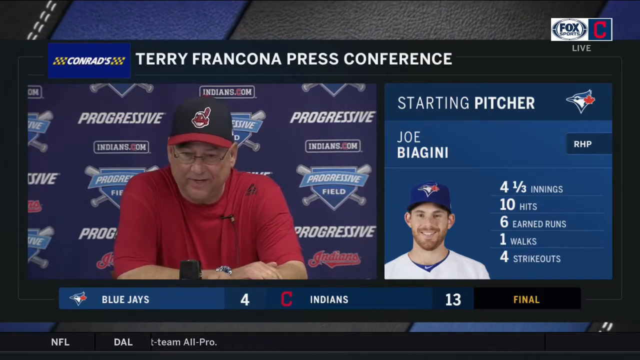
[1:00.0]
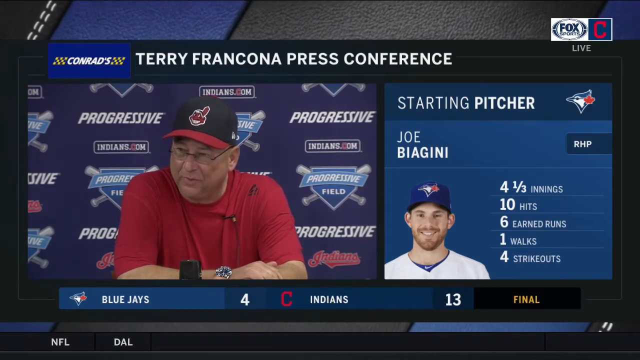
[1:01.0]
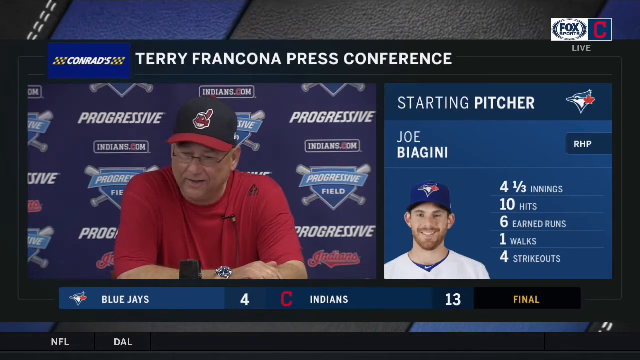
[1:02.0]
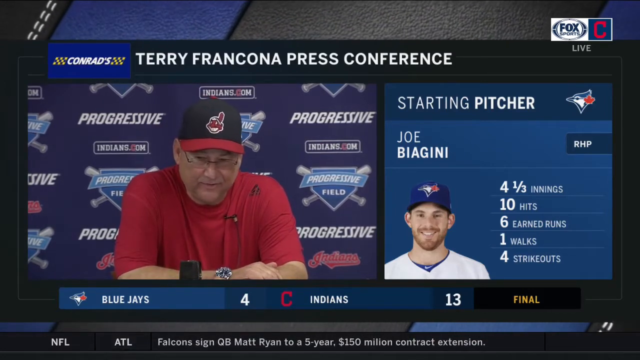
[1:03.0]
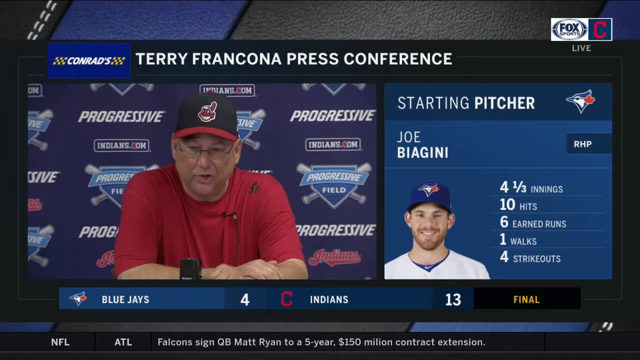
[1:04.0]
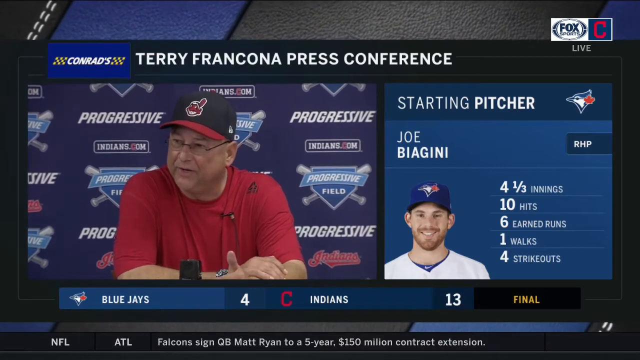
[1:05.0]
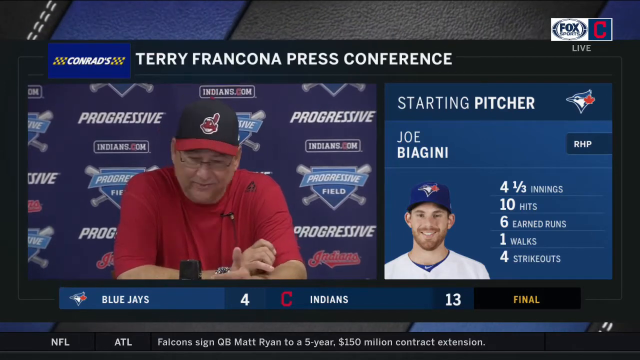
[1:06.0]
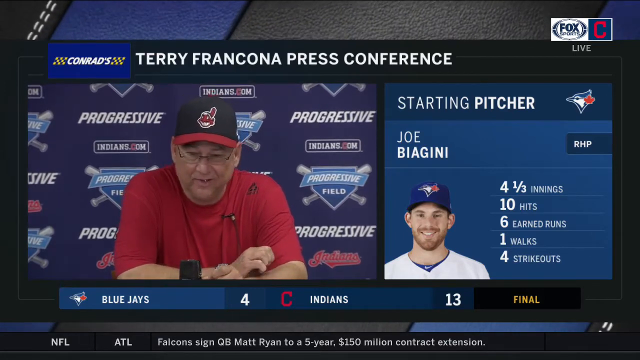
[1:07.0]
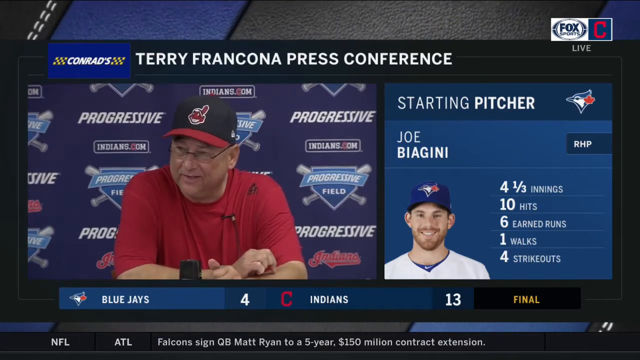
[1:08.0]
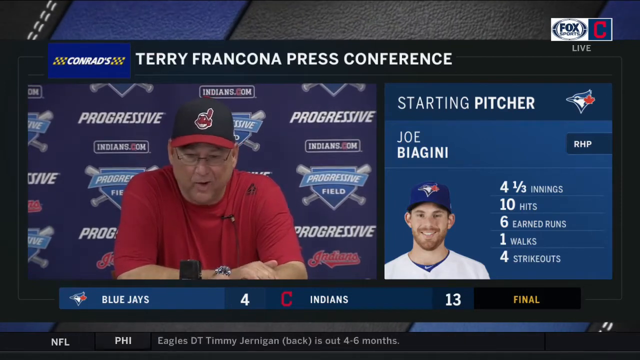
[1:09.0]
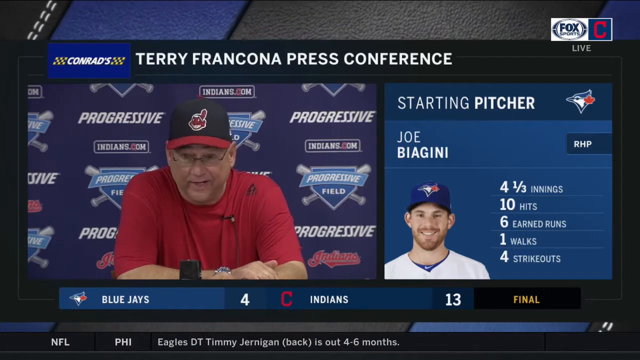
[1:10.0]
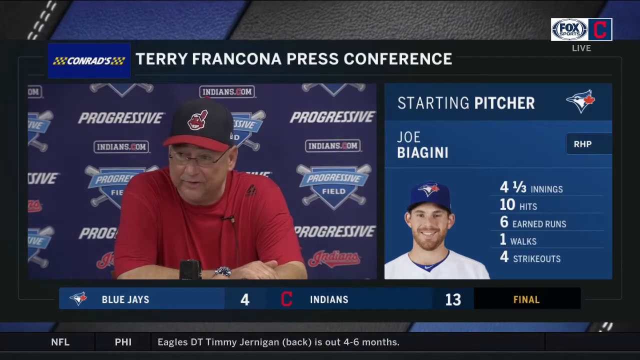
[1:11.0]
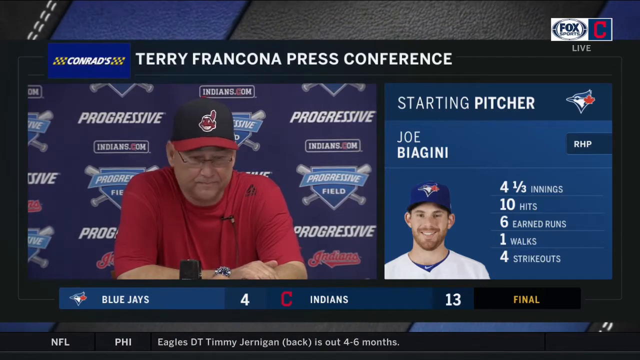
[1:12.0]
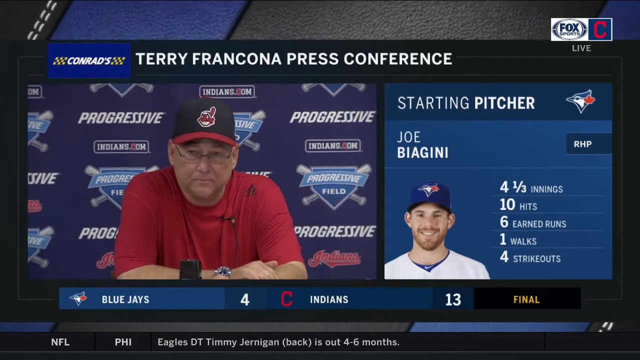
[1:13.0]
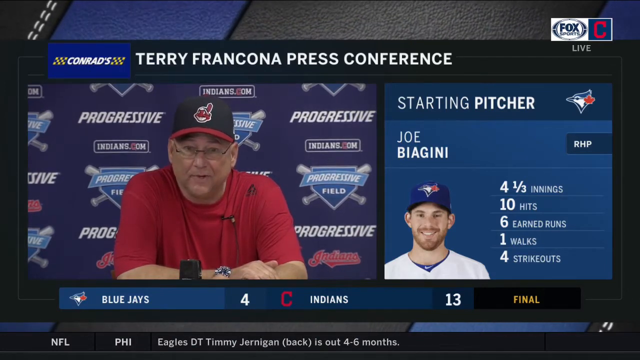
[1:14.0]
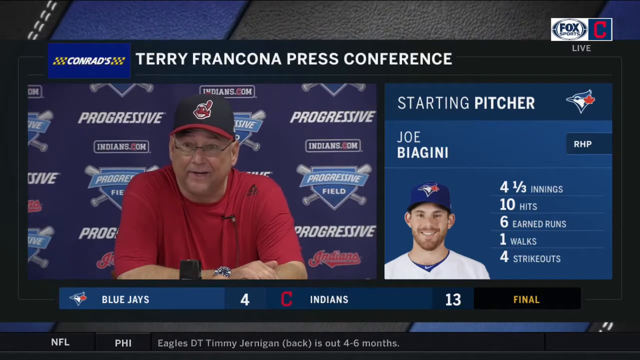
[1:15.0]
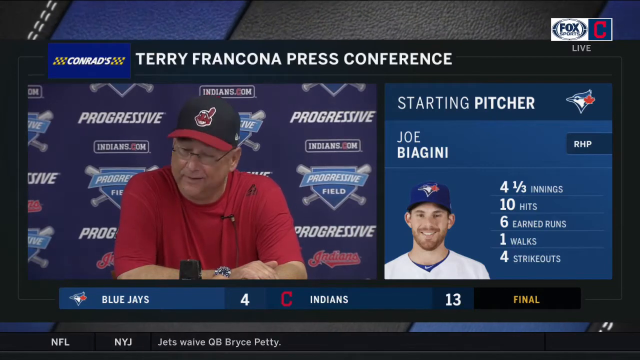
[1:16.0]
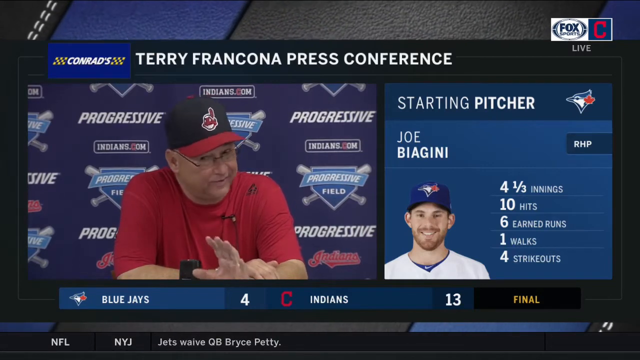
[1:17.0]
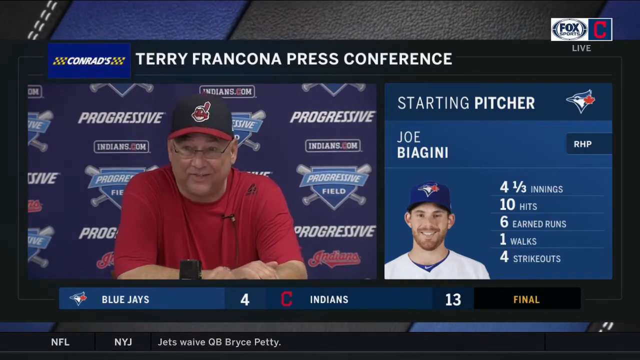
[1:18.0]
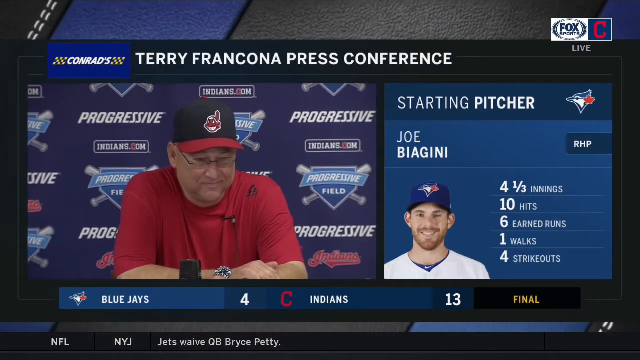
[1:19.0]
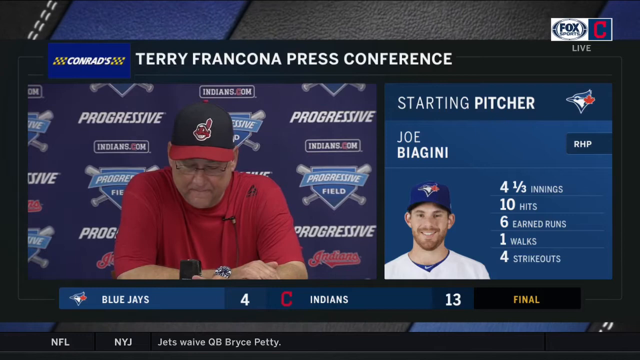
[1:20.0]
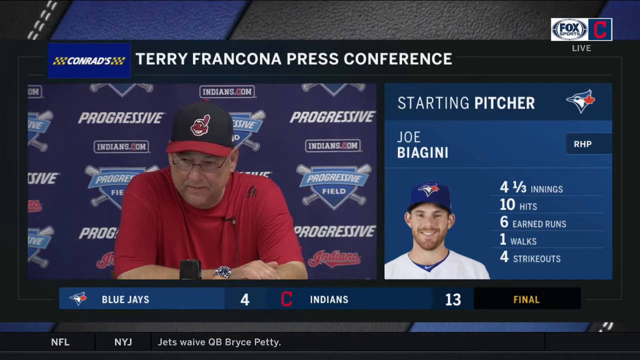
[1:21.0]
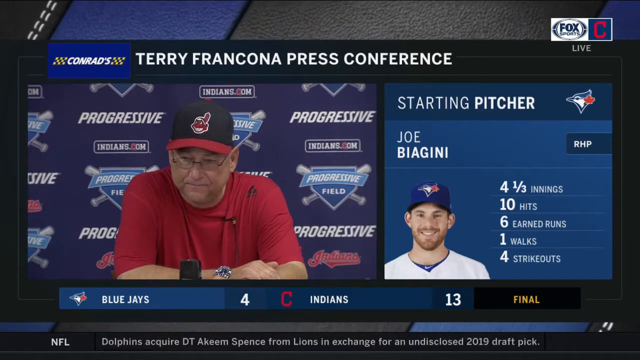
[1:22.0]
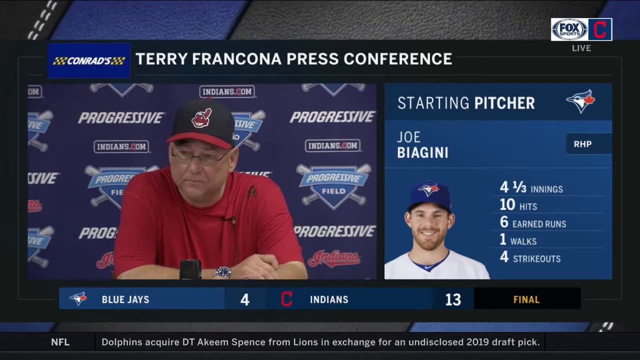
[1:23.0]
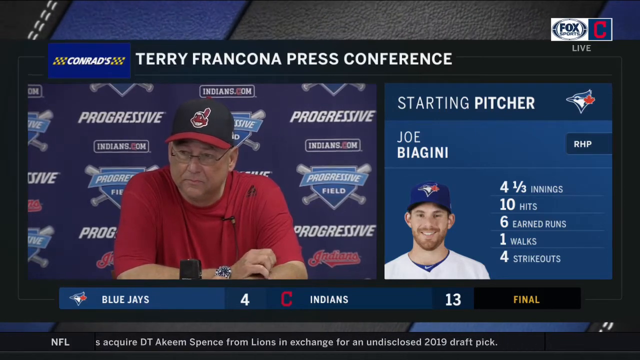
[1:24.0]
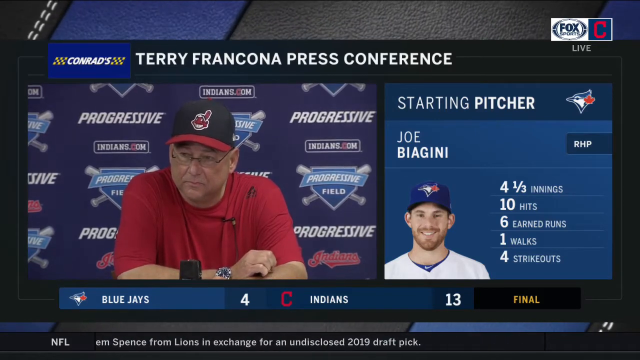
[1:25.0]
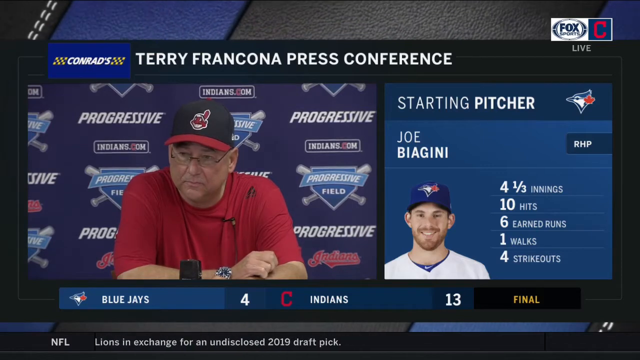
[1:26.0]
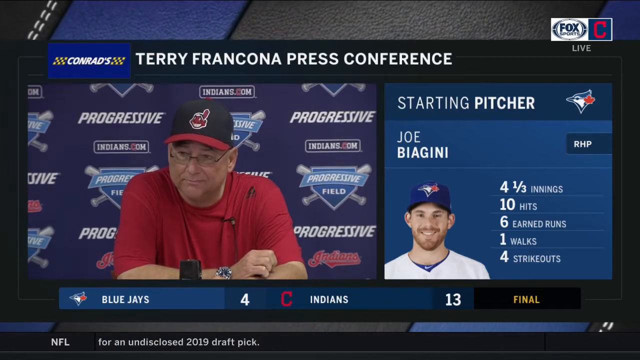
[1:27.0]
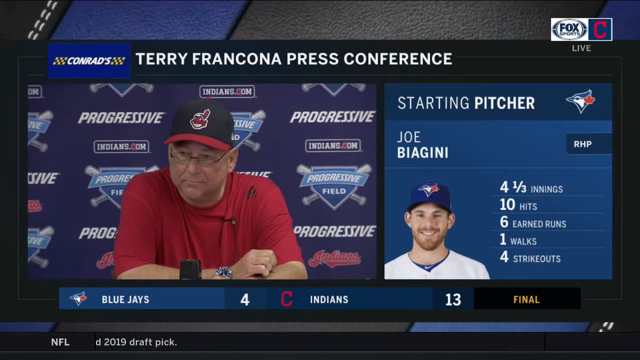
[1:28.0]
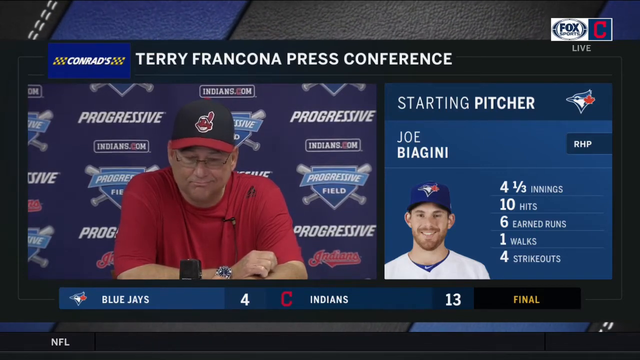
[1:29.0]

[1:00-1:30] The title "Terry Francona press conference" continues. Two people are shown: one is just a picture accompanied by his sports stats, and on the other side is the man actually holding the press conference. He wears a short red-sleeved shirt, and a black microphone is near him. He keeps turning his head toward the left side of the screen, which is actually his right, answering people's questions from that side. He tilts his head, and every now and then he raises the palm of what looks like his left hand.